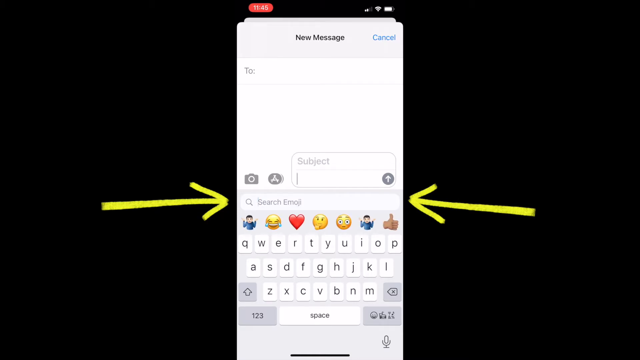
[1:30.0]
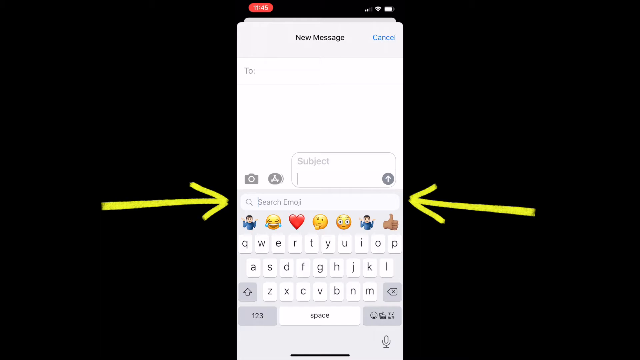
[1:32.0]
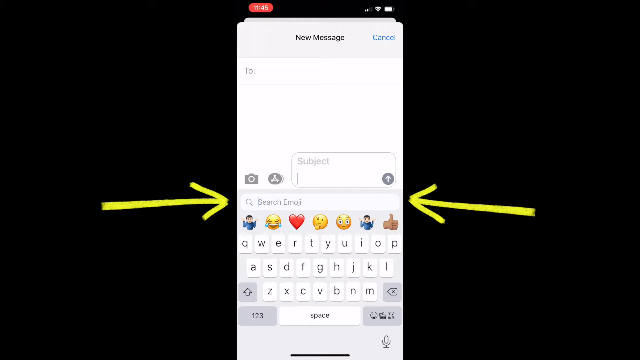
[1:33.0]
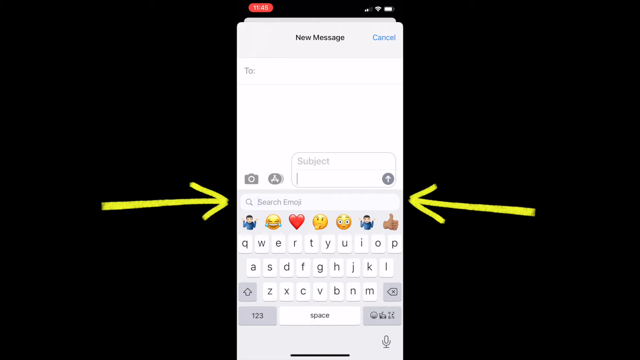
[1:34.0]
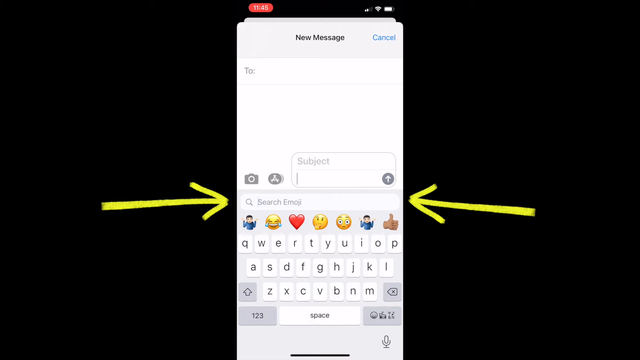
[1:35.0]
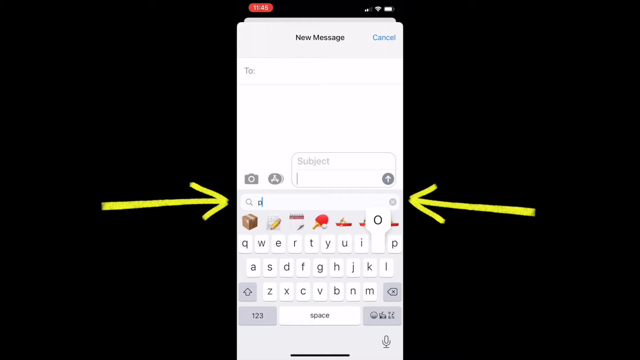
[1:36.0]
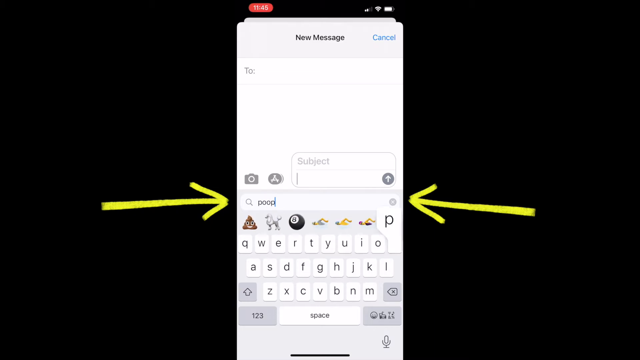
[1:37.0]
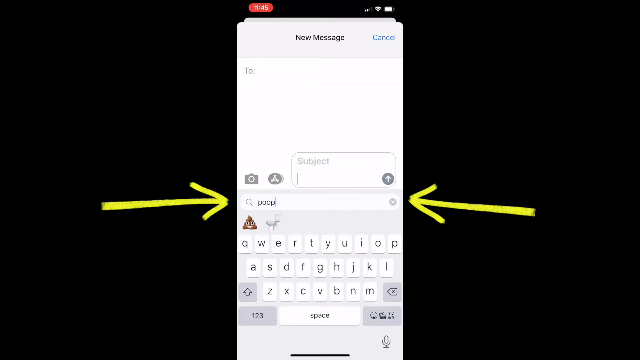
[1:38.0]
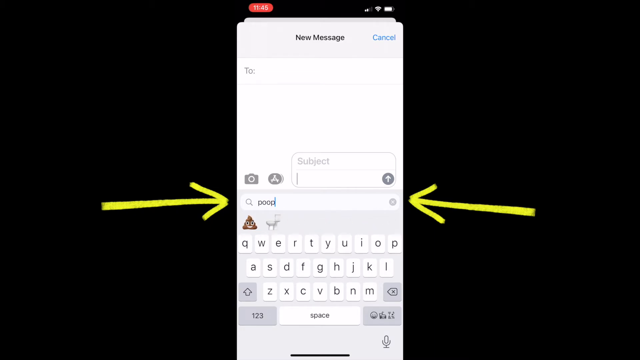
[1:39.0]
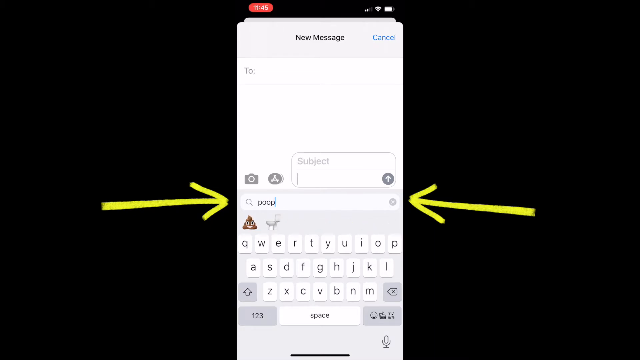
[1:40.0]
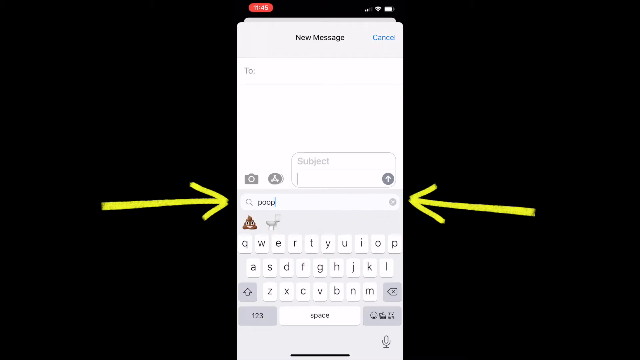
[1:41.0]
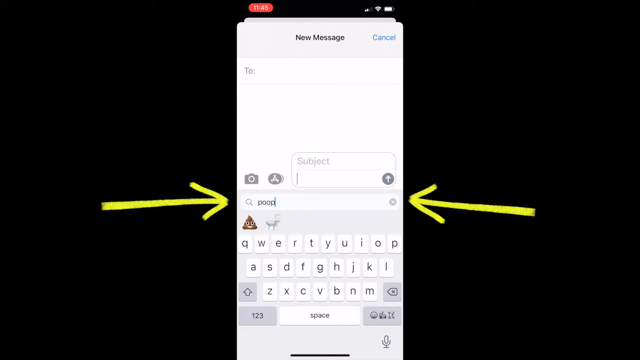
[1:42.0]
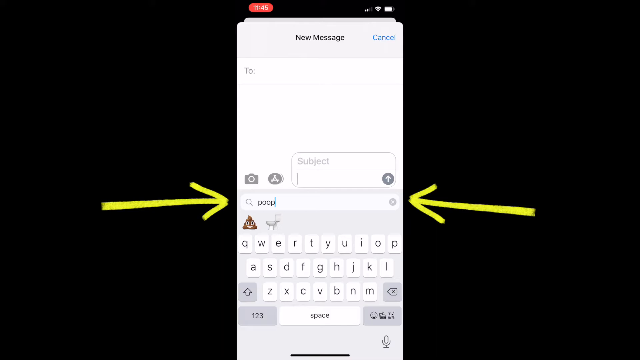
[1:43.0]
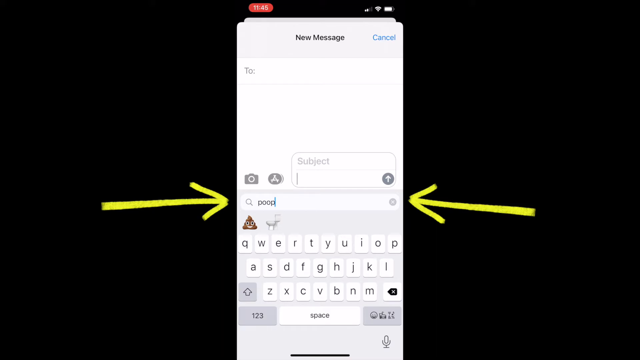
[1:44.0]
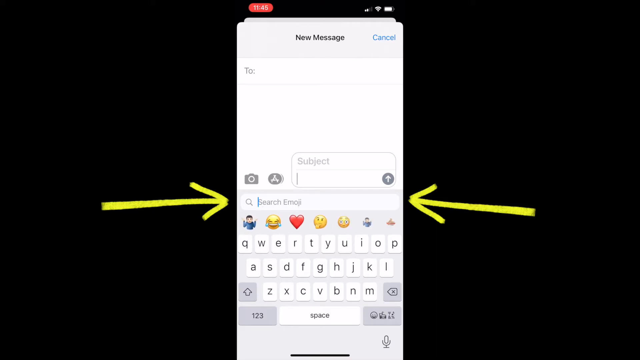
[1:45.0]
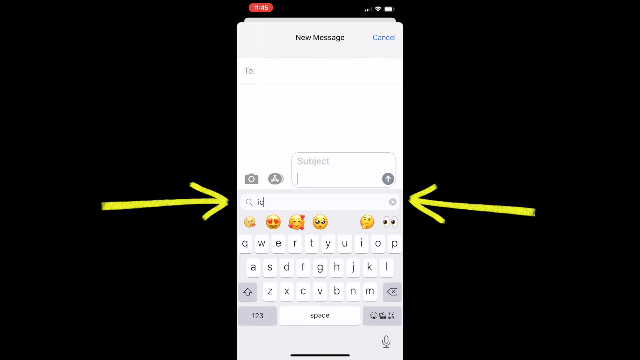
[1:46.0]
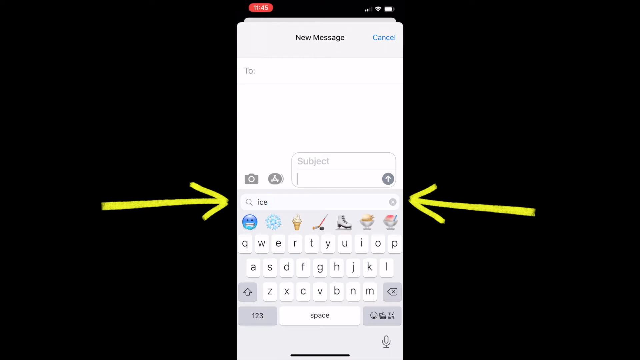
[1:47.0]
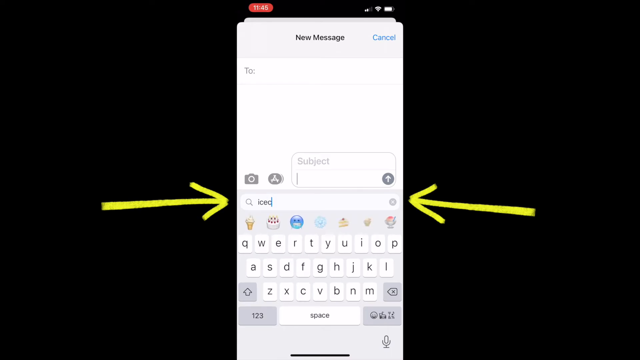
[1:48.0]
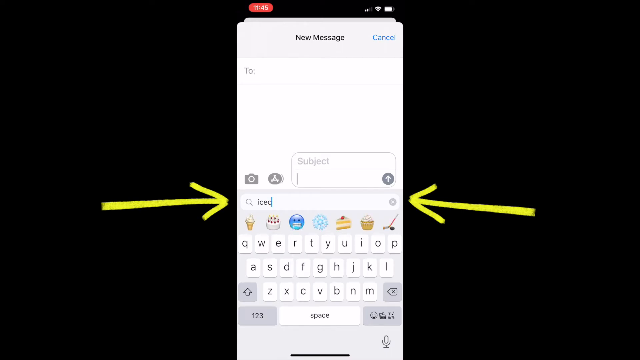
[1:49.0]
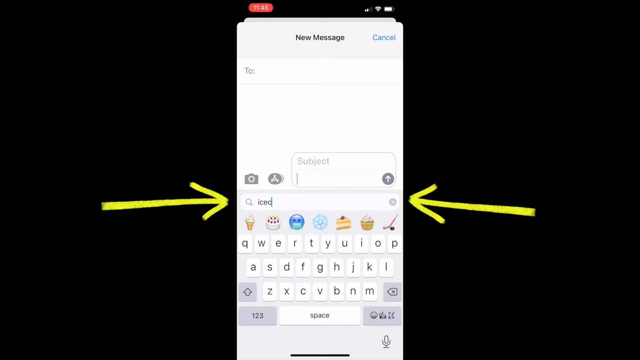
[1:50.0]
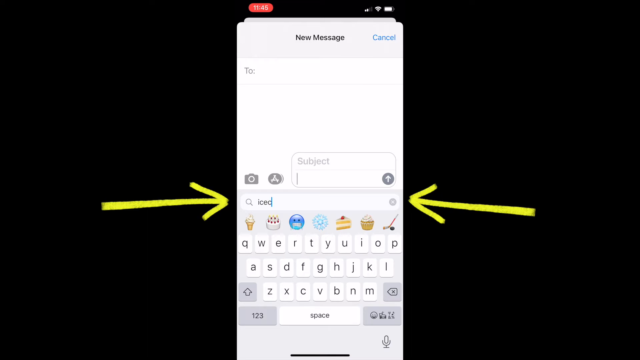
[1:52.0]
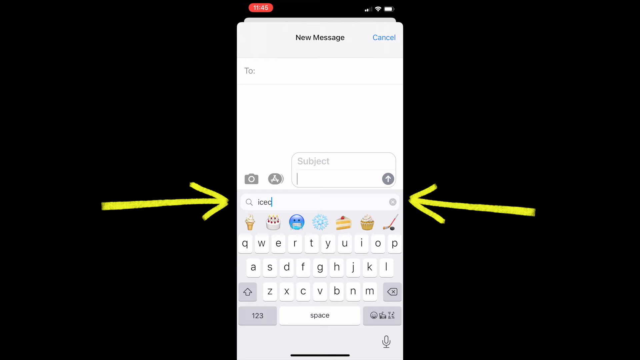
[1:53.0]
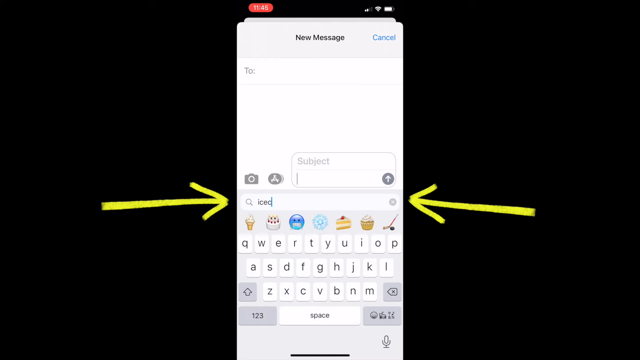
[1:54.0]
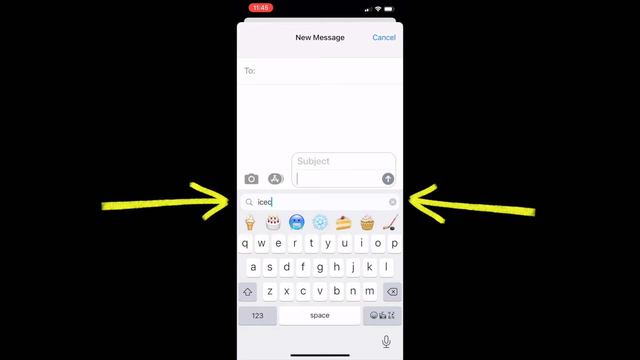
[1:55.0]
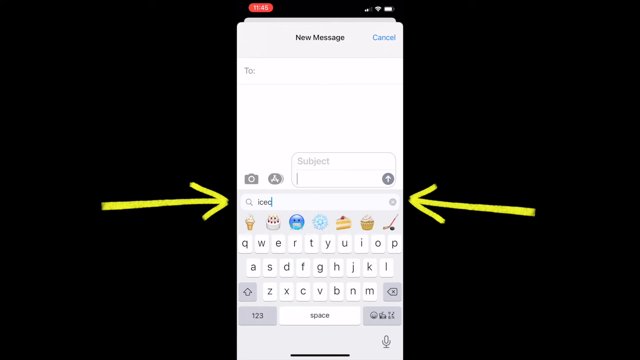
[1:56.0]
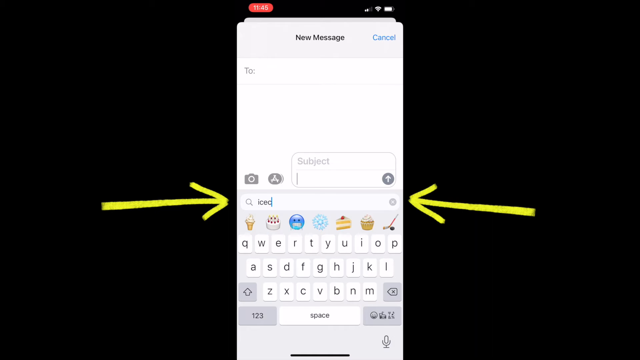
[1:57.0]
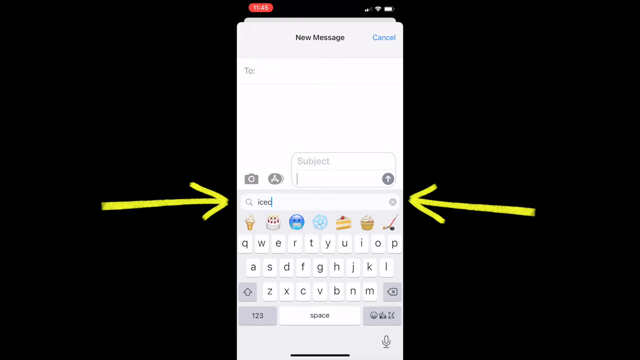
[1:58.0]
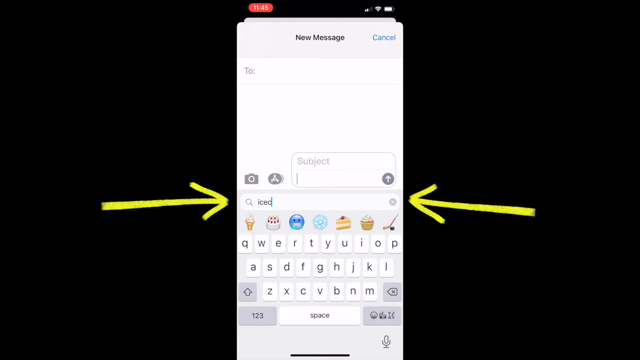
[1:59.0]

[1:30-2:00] Different emojis are searched for in the message. The poop emoji is searched for, then erased, and ice cream is searched for. Then the view goes back to the main screen. Each search brings up different emojis to pick from. Nothing has been typed into the message yet: the "To" field is totally blank and the subject is also totally blank.